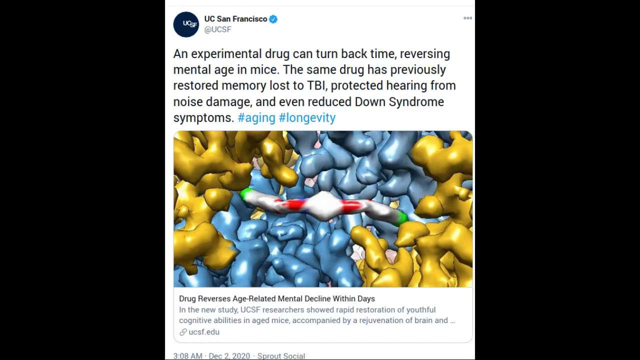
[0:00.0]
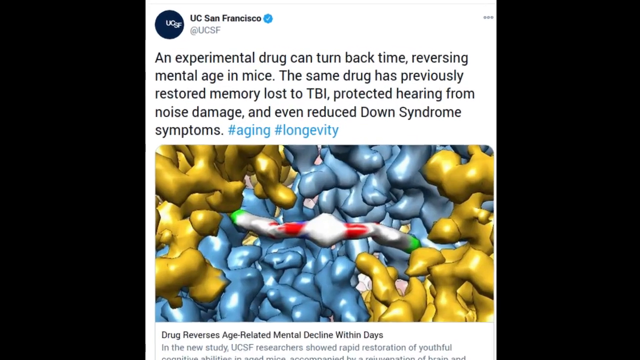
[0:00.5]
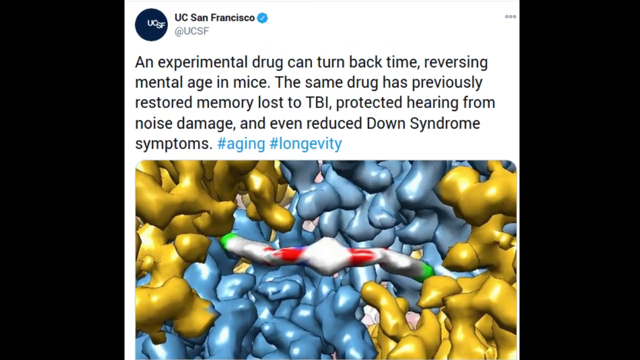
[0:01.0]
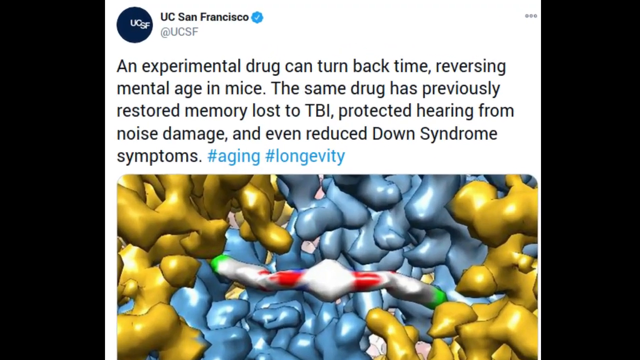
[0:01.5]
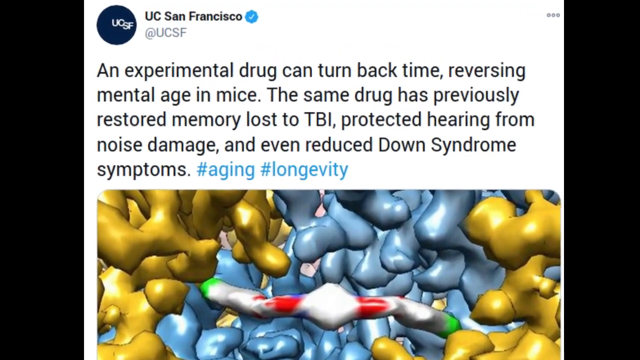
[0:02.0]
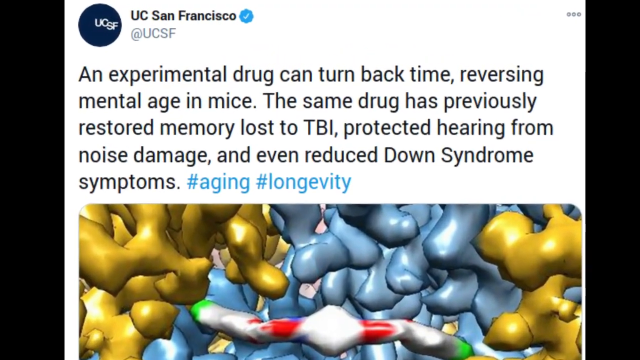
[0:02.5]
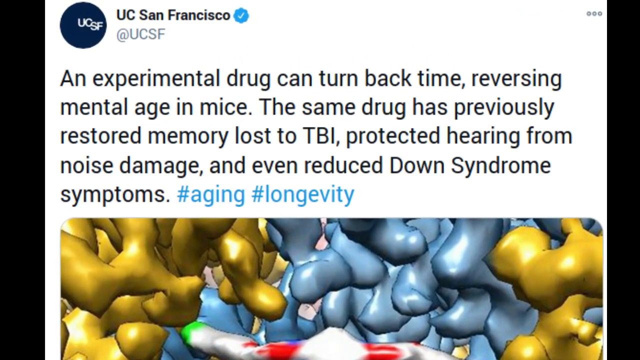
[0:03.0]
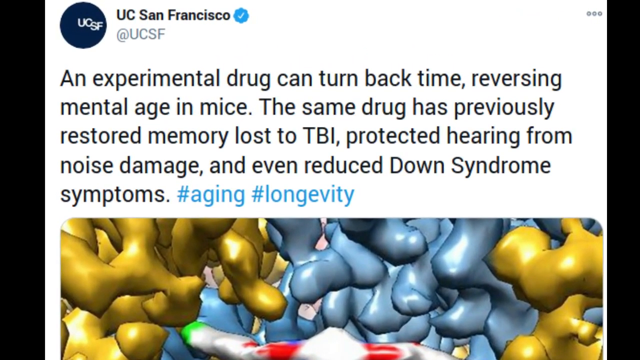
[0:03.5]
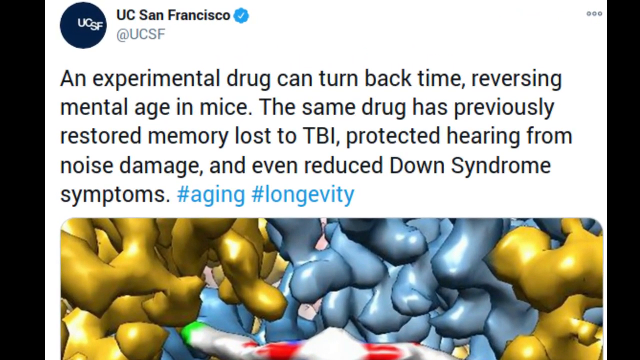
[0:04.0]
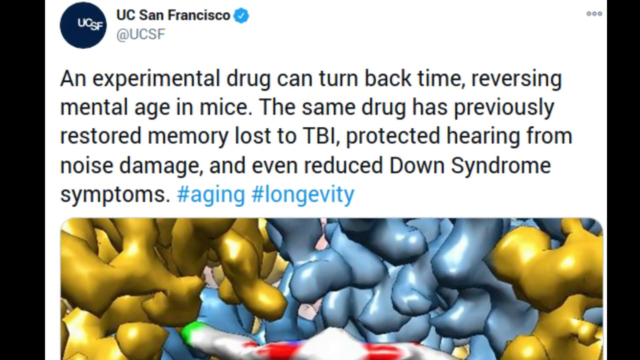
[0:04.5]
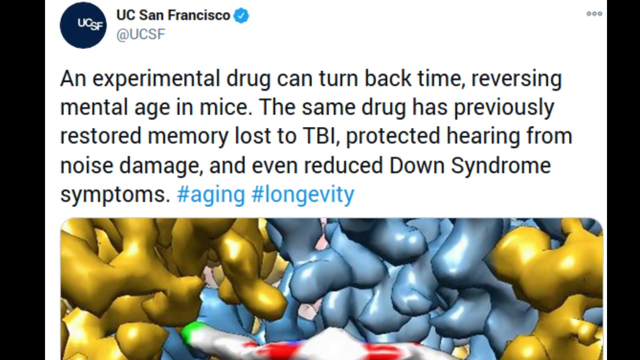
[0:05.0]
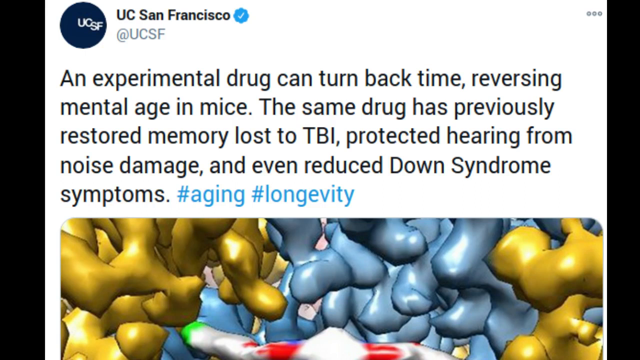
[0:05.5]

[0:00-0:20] A social media post, apparently from UC San Francisco, is on screen. Black text reads: "an experimental drug can turn back time, reversing mental age in mice. The same drug has previously restored memory loss to TBI, protected hearing from noise damage, and even reduced down syndrome symptoms." Below it, in blue, is "#aging #longevity". Underneath is a graphic of blue and yellow splotches, small splotchy formations with a little highlight on them, and in the middle a white one with some red and green on it. At the top, next to UC San Francisco, is a blue check mark, and to its left a navy blue circle with "UCSF" in white text. At the start there are two black bars, one on the left and one on the right, and the view zooms in, coming closer to the post and focusing on its text.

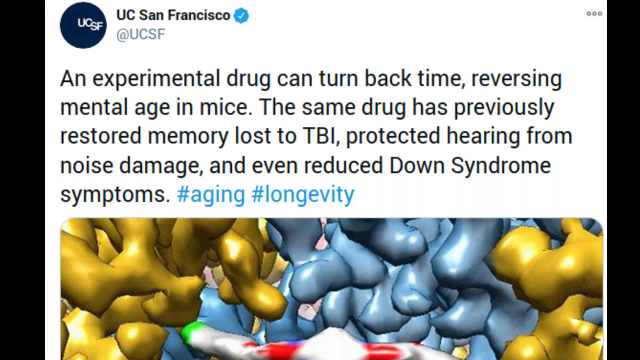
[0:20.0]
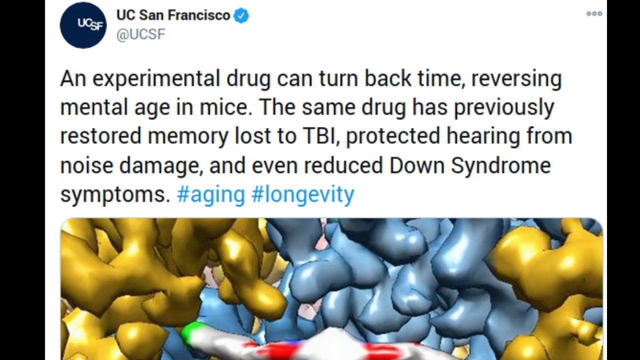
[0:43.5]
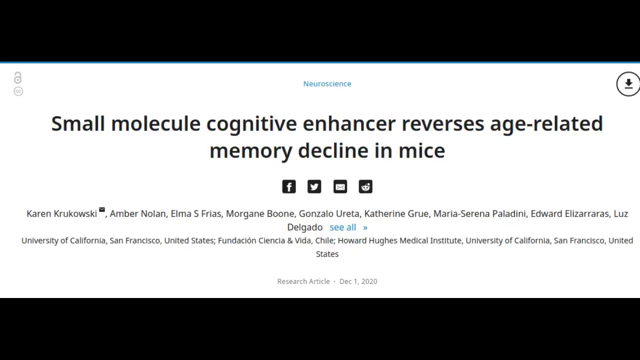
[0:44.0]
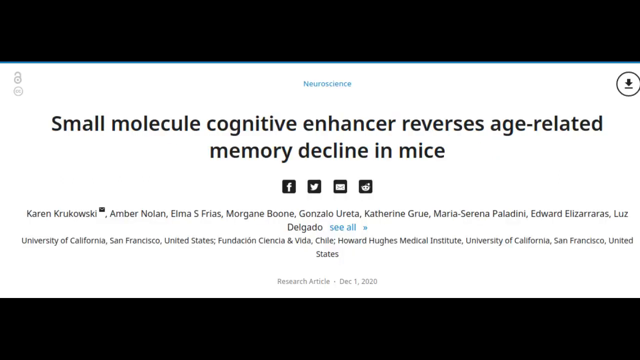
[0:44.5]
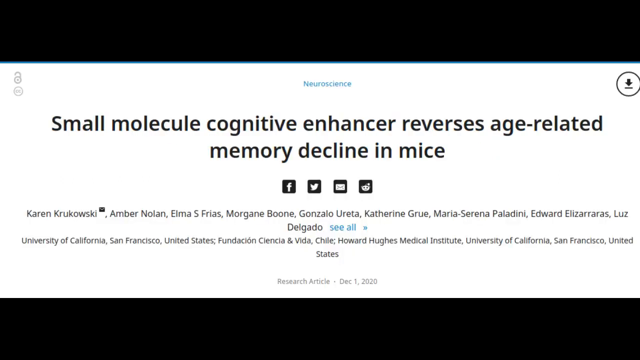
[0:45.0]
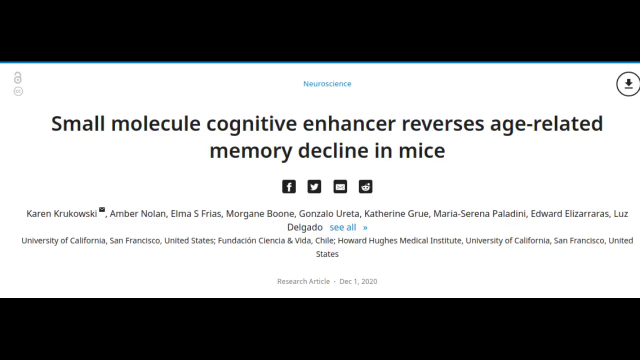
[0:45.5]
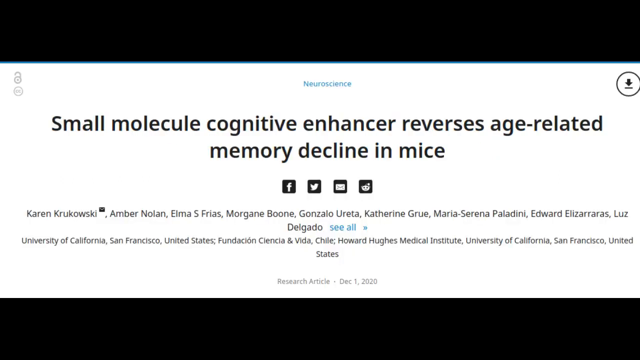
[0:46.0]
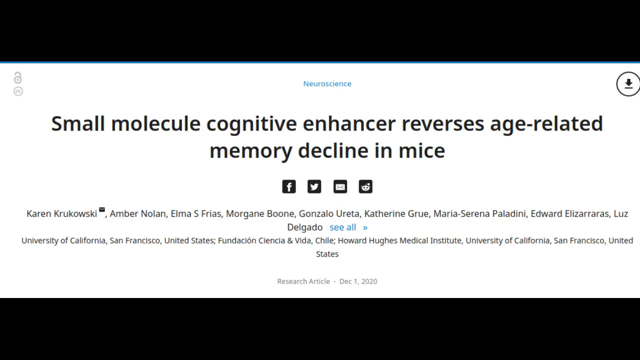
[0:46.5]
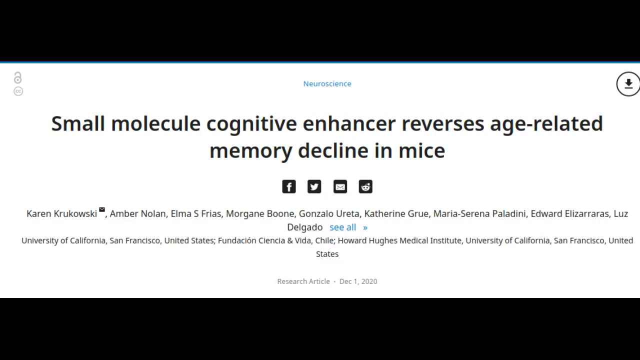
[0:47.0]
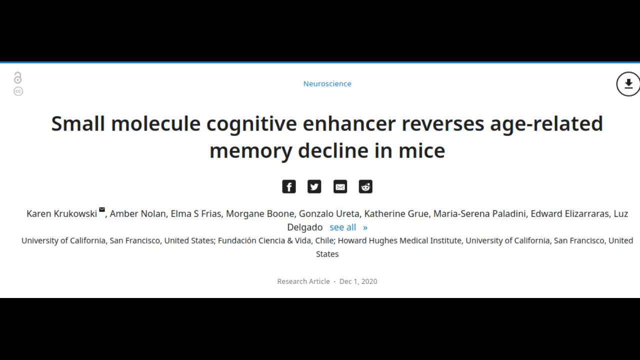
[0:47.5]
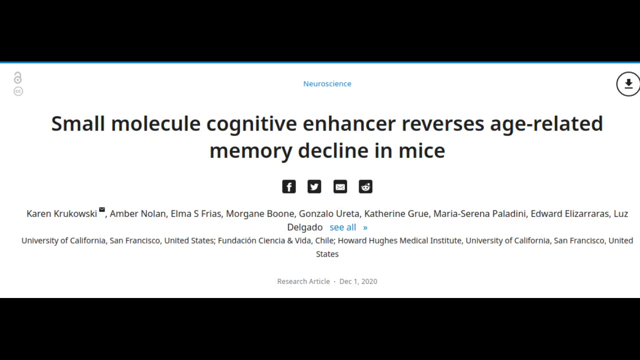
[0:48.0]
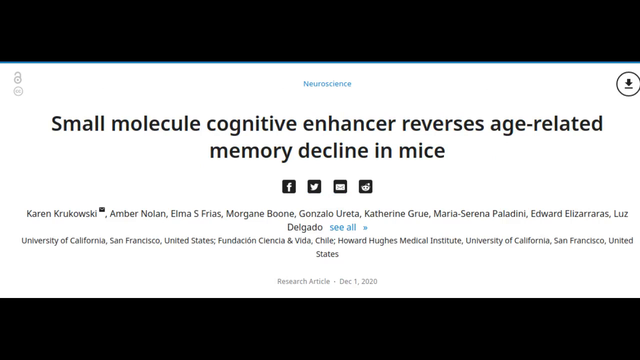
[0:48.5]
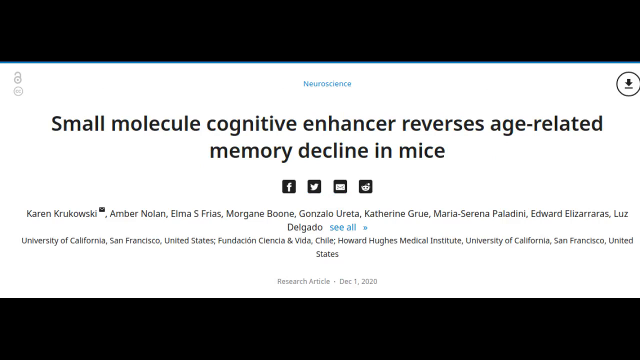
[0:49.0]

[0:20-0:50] The view stays focused on the social media post and its black text for several seconds, then switches to another graphic with a black bar at the top and bottom and white in the middle. At the very top of the white rectangle, in tiny blue writing, is "neuroscience", followed by a black title: "small molecule cognitive enhancer reverses age-related memory decline in mice". Below are four small social media icons, like Facebook and Twitter; the other two are unidentified. Underneath are many names in tiny black text, a whole line of names, and below them "see all" in tiny lowercase blue letters. Lower down are credits including "University of California, San Francisco, United States" and some other foundations, and at the very bottom, in very tiny gray text, "research article December 1, 2020". In the upper right is a circle with a downward-pointing arrow in the middle and a line under the arrow's tip.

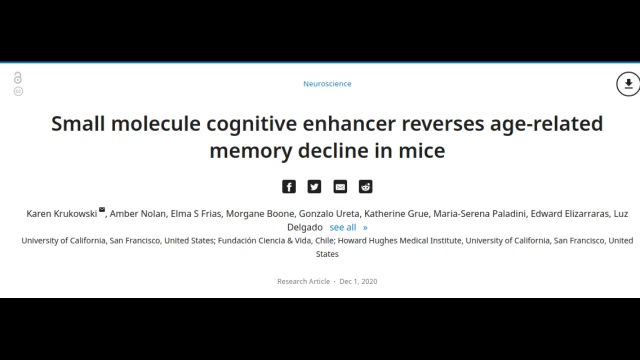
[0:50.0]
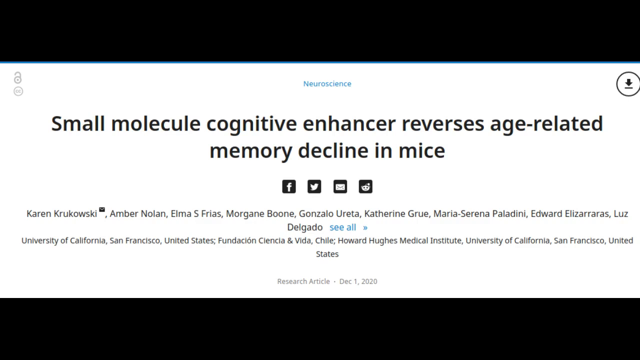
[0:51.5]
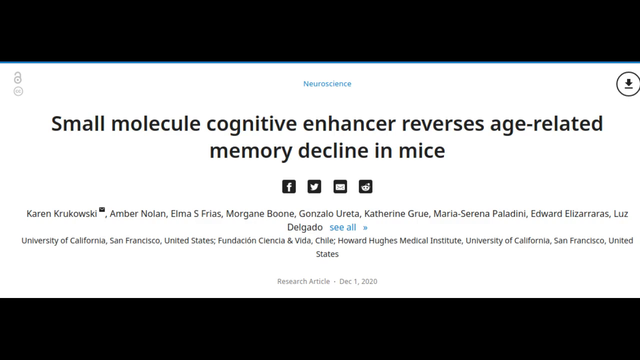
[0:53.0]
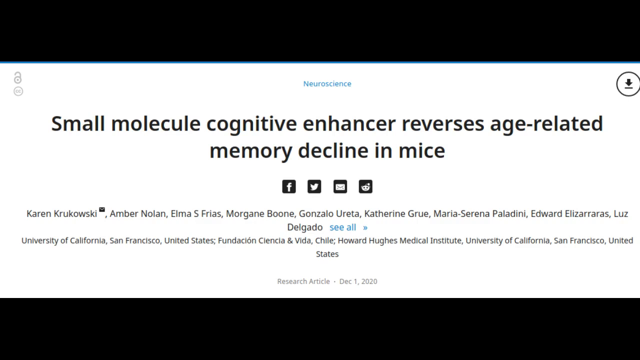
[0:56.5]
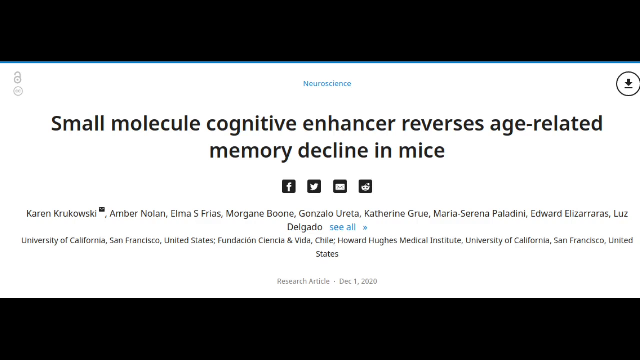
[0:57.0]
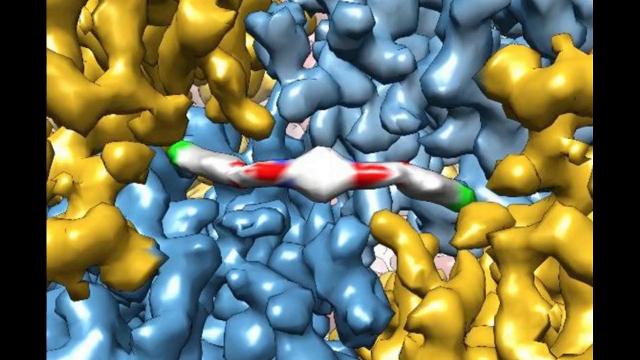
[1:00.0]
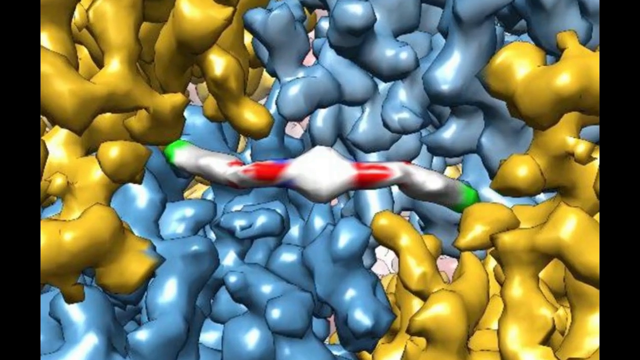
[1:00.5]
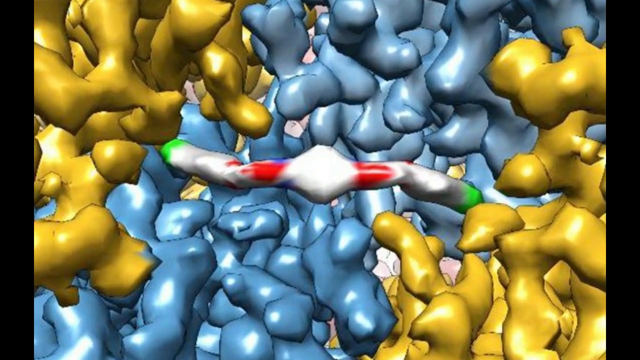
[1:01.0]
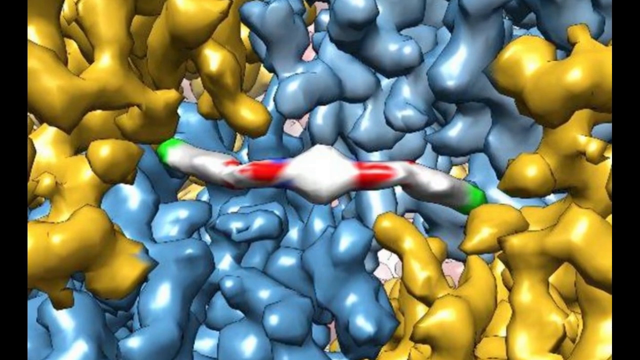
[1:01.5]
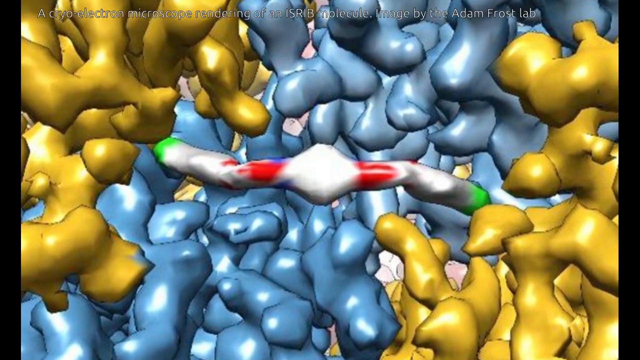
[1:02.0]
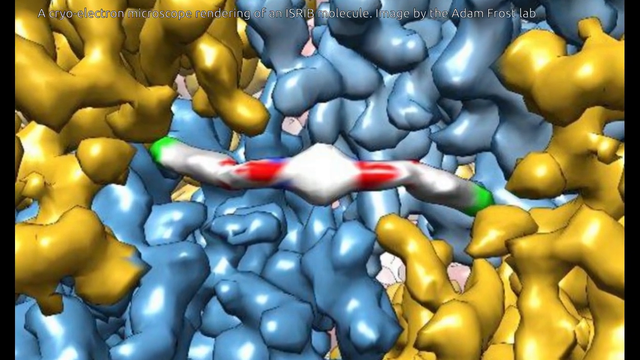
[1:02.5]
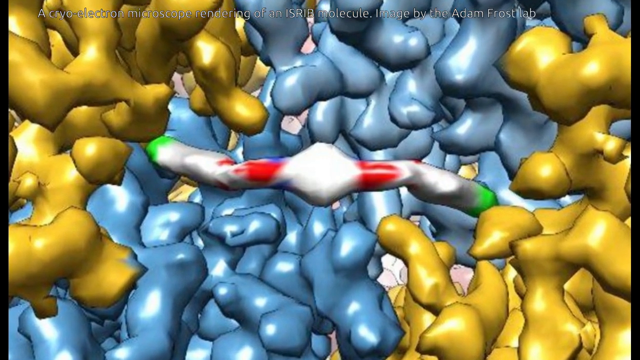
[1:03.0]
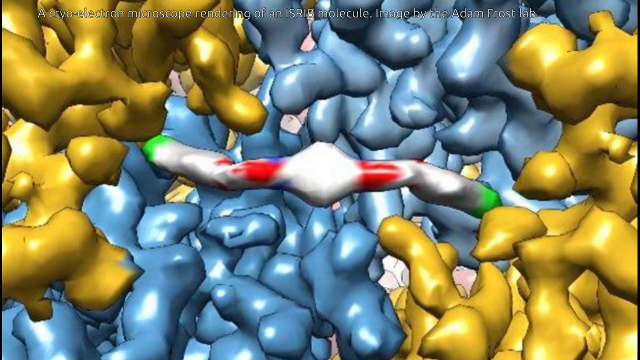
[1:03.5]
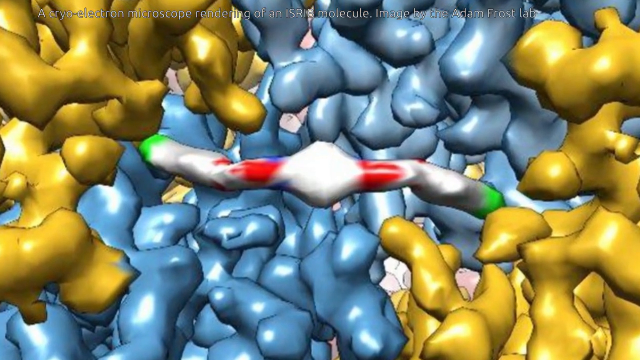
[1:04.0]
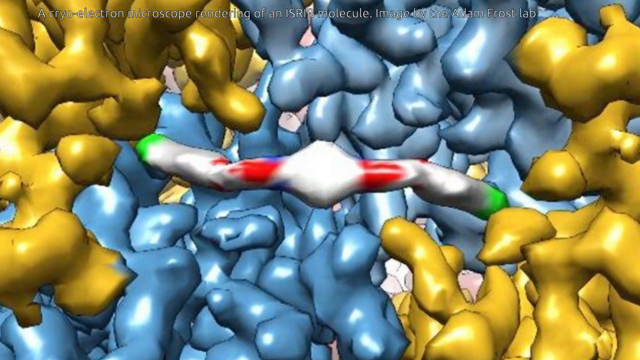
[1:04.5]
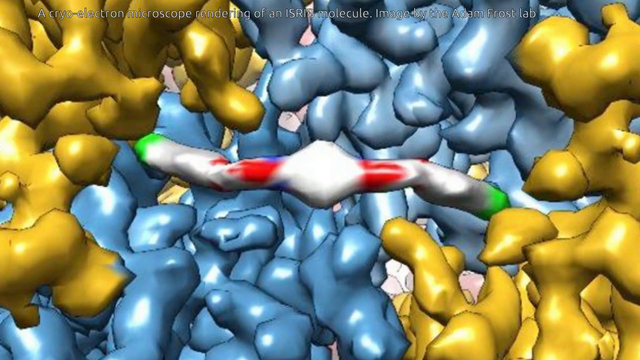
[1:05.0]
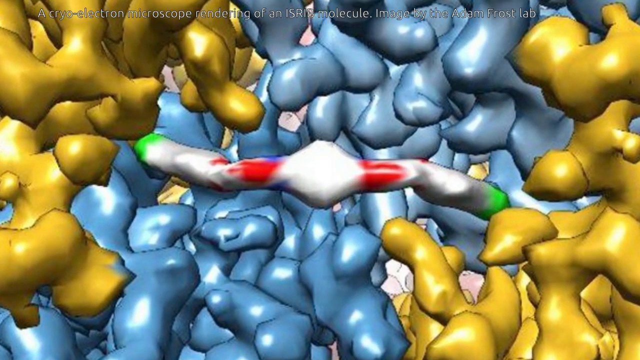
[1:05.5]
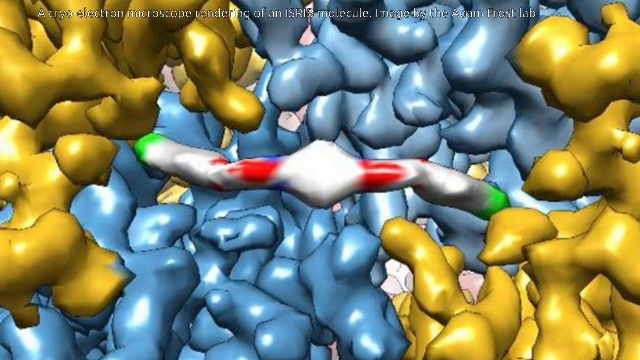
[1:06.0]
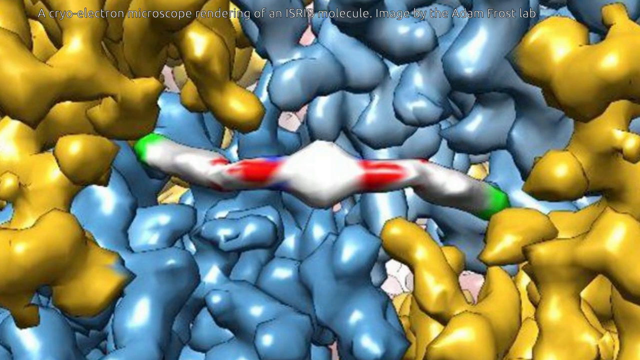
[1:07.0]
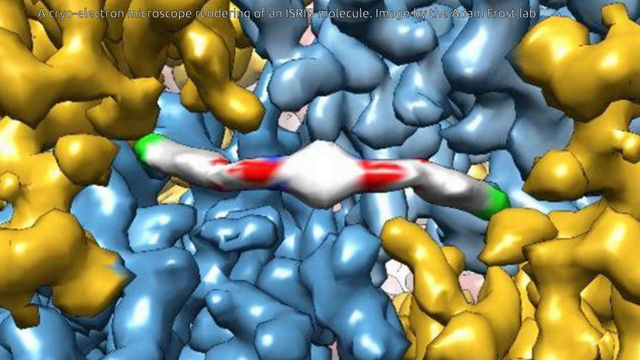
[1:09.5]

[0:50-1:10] The video moves away from the white text and returns to the graphic of irregular blue and yellow clusters with white in the middle, panning in closer and closer to the white part. The white part is almost like an irregular tube, bulging in the middle. On either side of it is bright red, with a little white on that band, then green, which disappears into the sea of blue and yellow: yellow, then a big blue area in the middle, then yellow on the right. The clusters look almost like little pieces of Play-Doh, irregular with sharp edges, and each blue and yellow piece has a bit of shine and highlight.